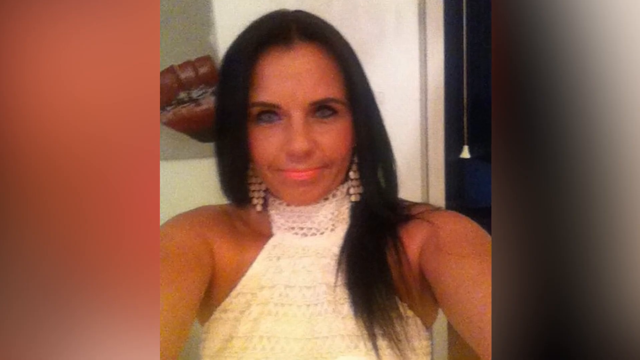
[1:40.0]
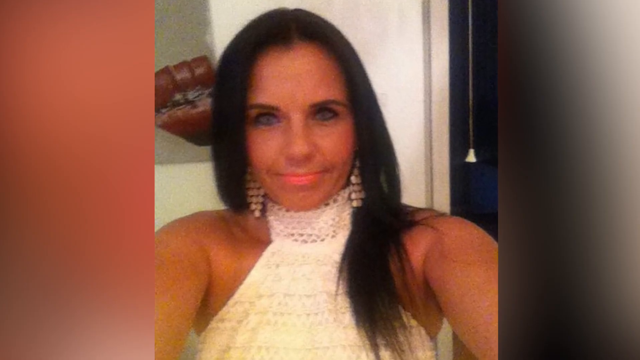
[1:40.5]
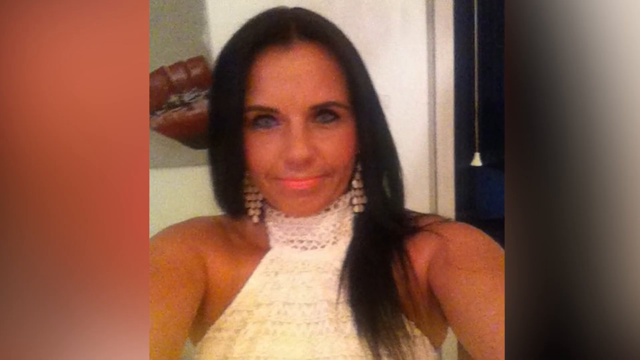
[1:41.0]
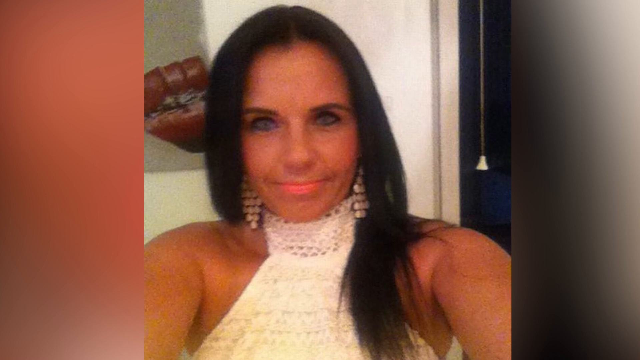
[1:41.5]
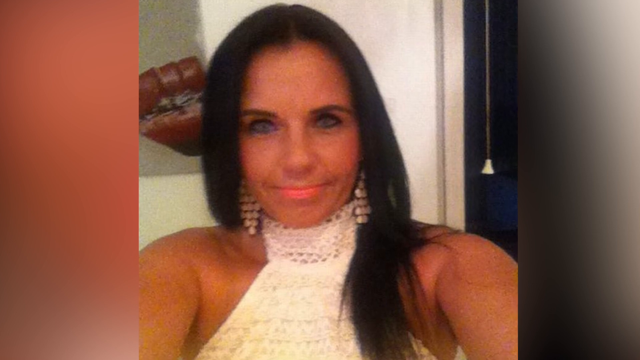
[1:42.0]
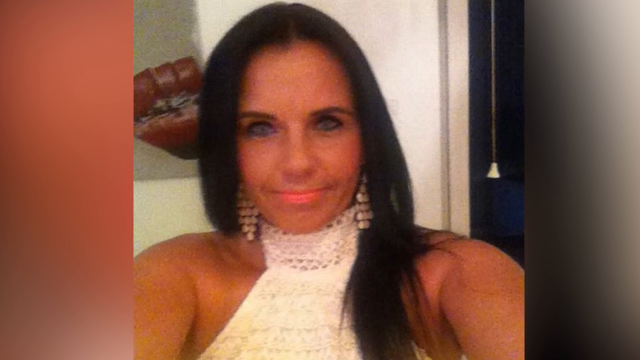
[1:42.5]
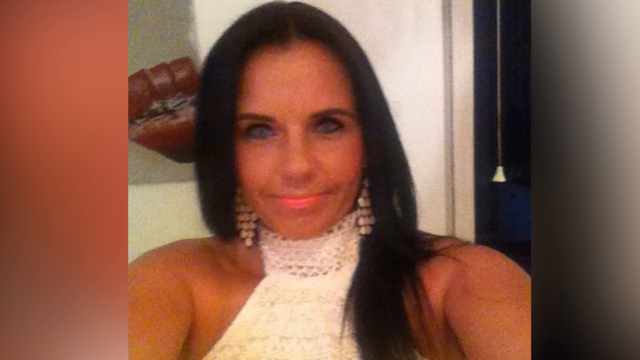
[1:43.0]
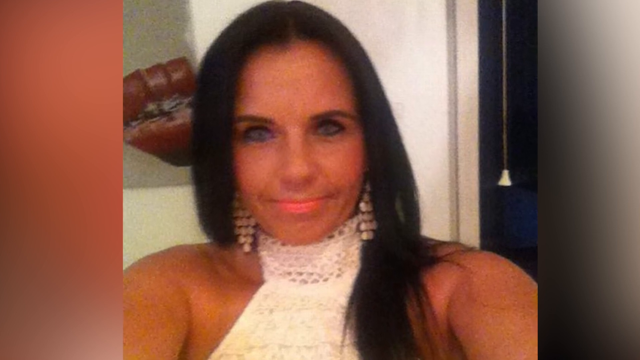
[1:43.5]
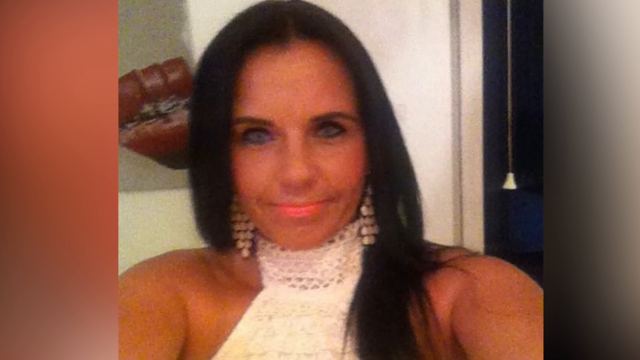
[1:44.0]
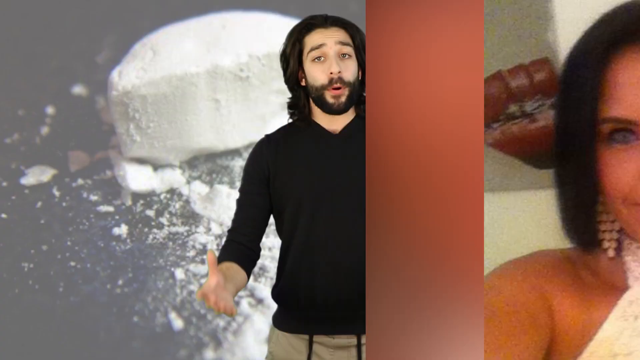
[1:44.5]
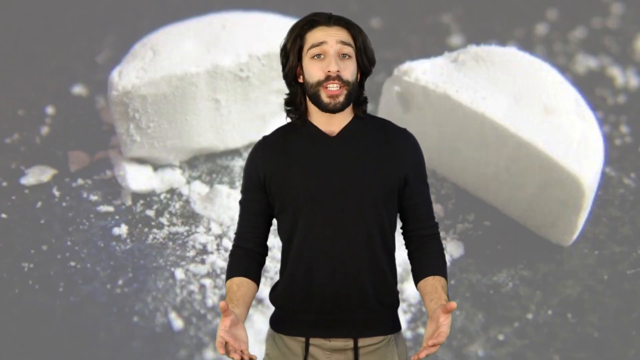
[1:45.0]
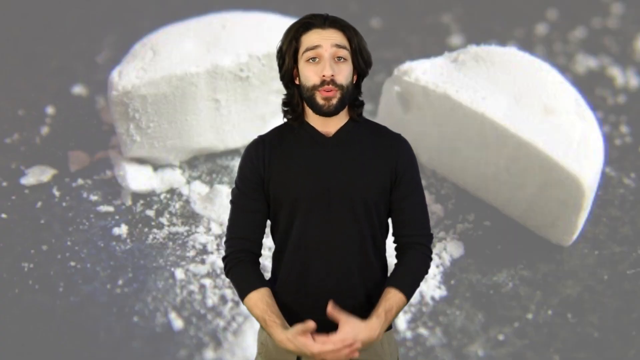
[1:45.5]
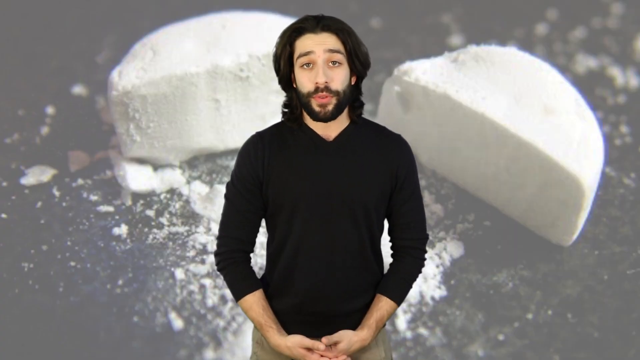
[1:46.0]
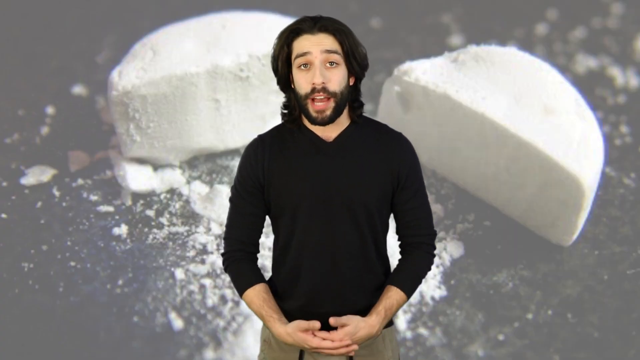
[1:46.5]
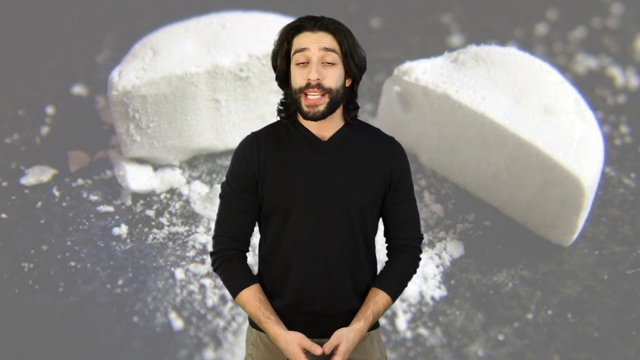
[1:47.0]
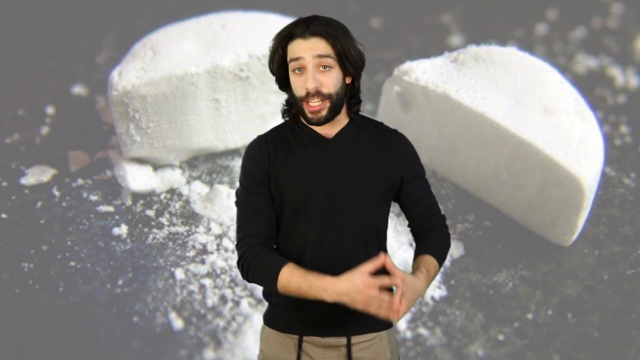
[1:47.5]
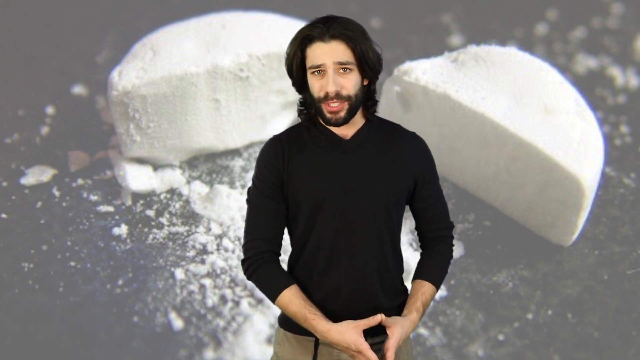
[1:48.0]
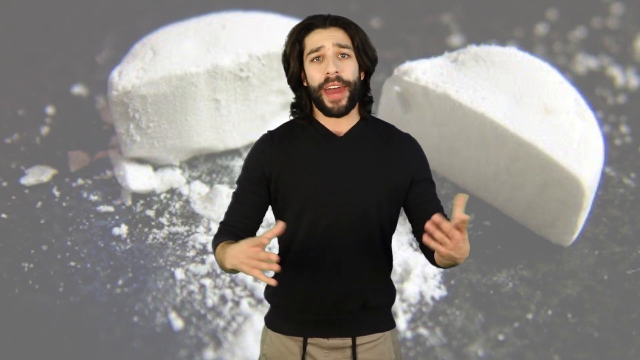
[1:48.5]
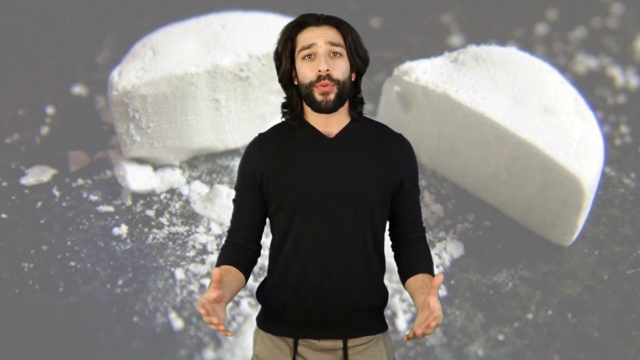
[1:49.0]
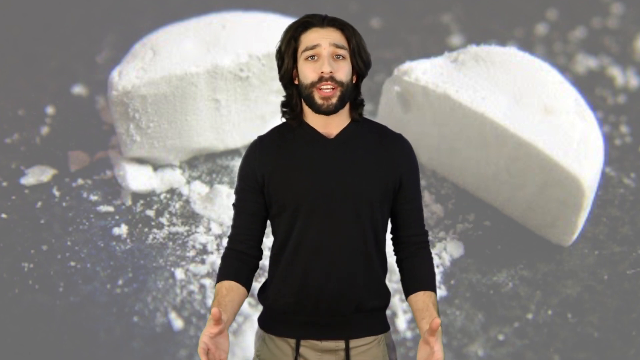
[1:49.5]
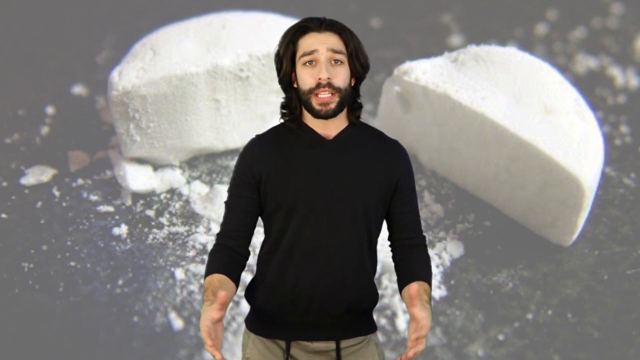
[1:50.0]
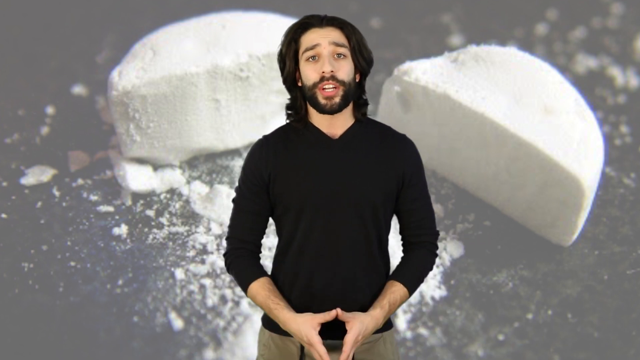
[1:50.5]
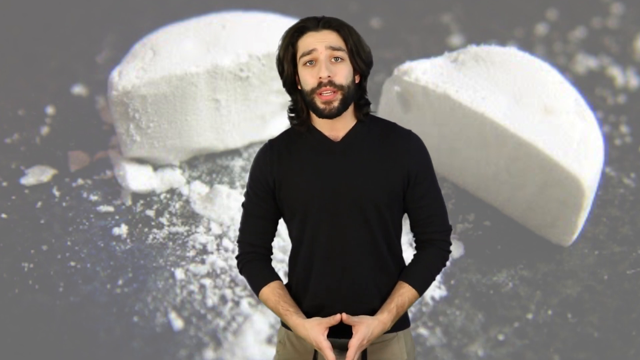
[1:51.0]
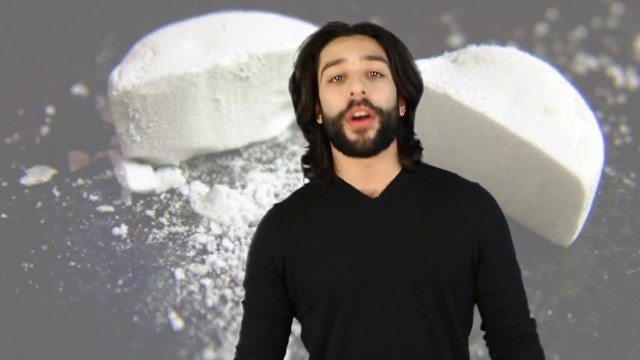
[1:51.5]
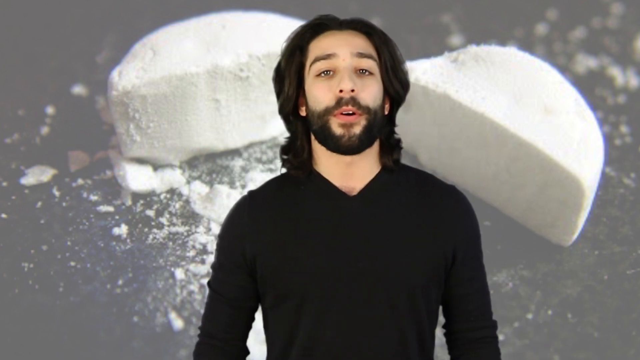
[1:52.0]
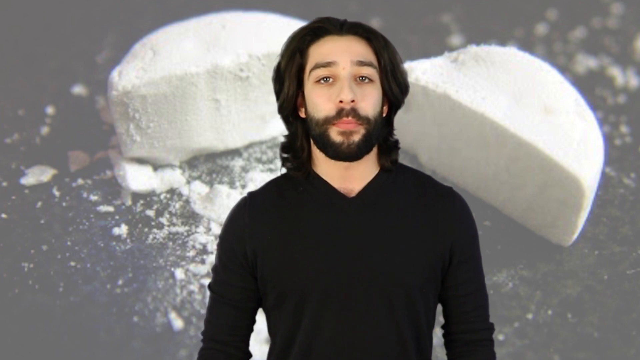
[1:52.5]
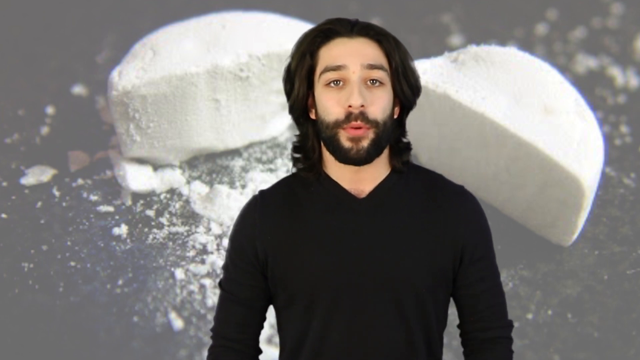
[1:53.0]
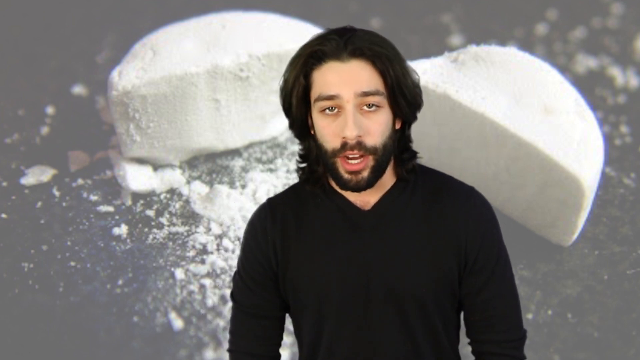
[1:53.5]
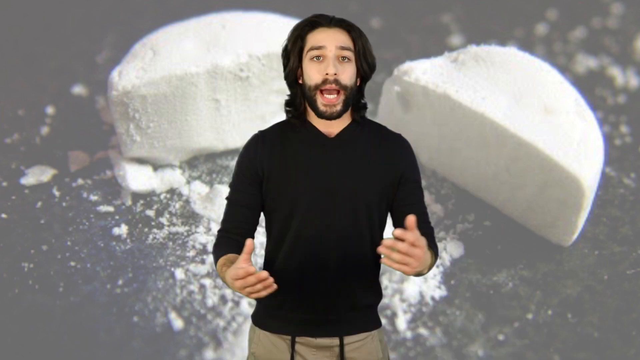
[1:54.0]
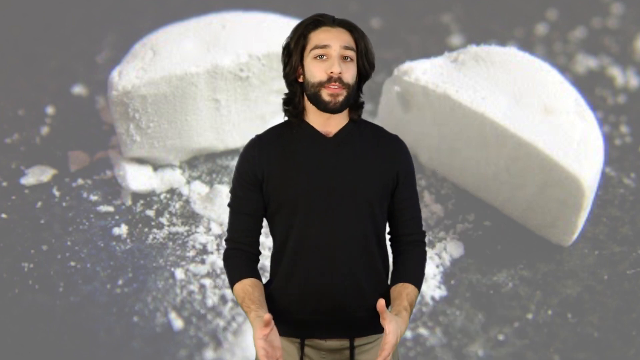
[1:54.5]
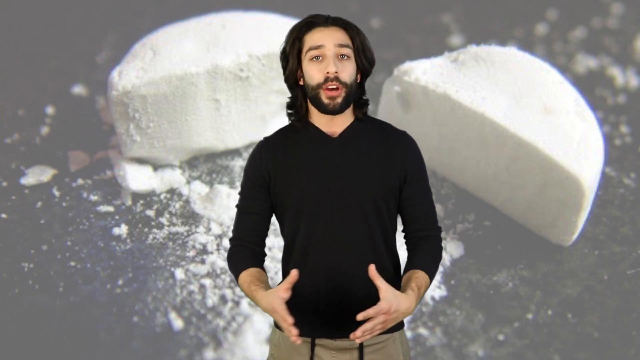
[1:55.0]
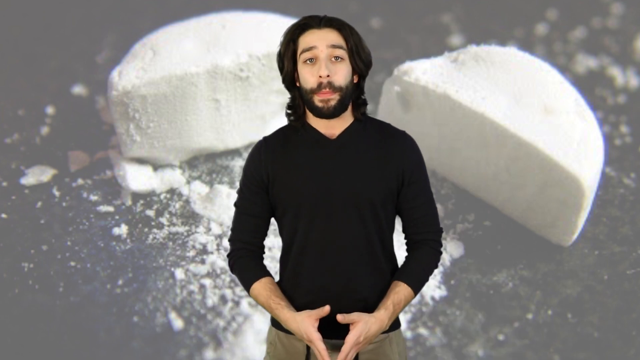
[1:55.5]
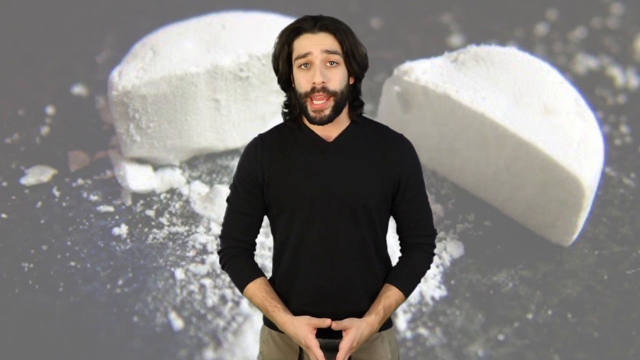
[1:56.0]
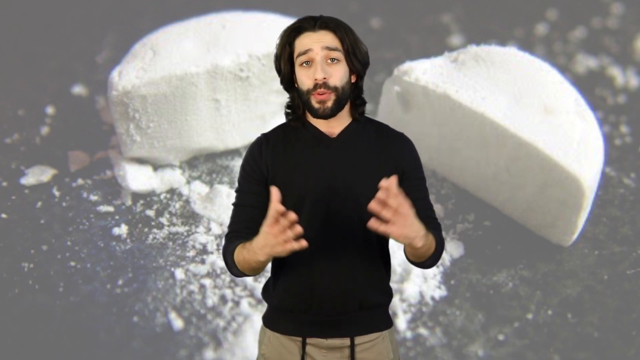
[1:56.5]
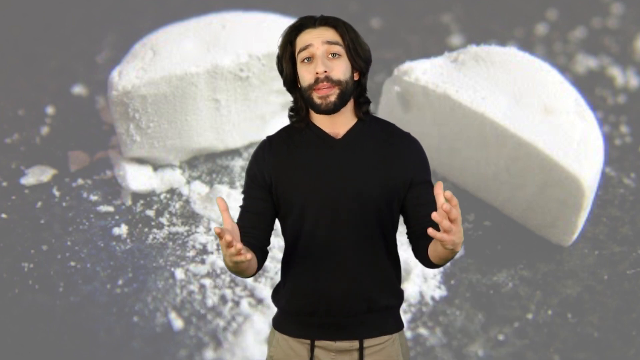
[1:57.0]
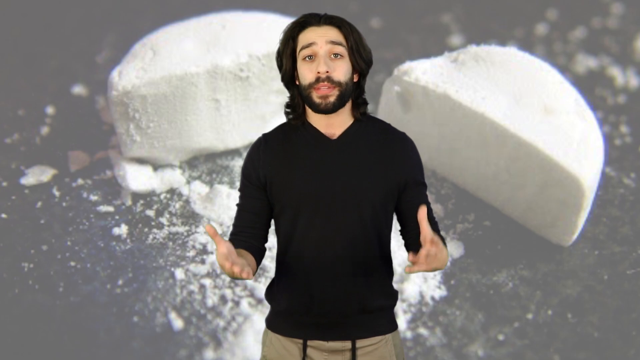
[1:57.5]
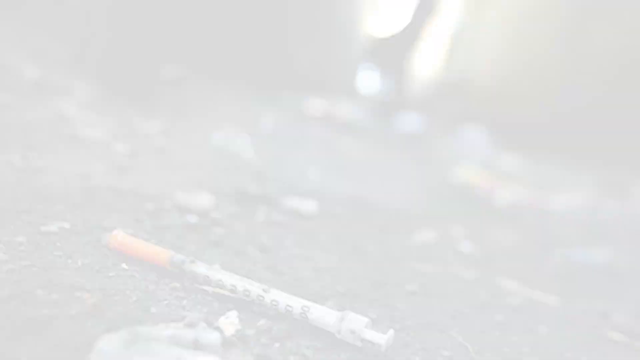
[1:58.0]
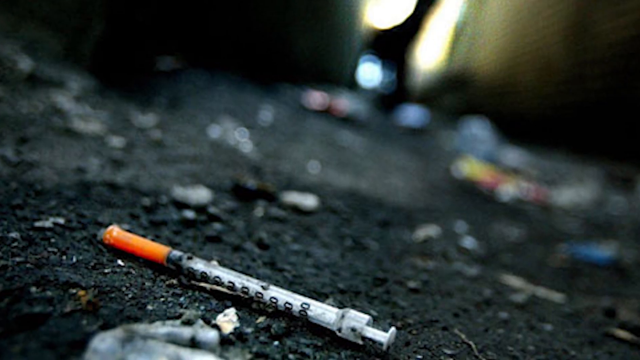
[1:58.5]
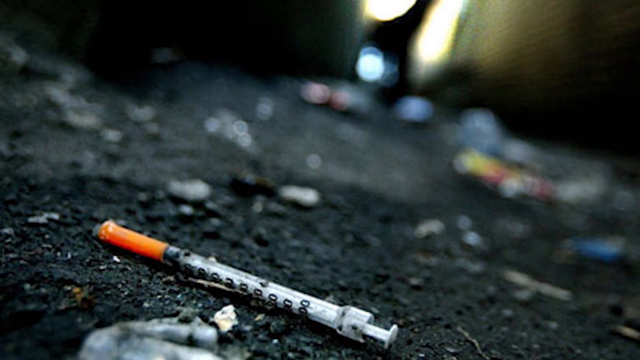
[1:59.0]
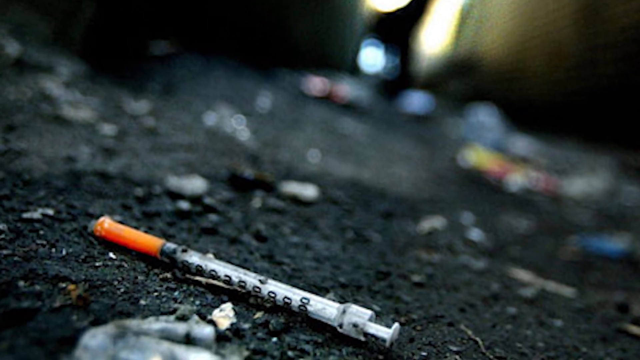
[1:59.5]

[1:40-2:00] The selfie of the woman is shown more closely. She looks healthy and happy and is smiling, with her hair done very nicely and wearing nice clothing, dressed up as she takes the photo of herself. At some point between shots of Jared speaking and this selfie, a syringe is shown on gravel, a sidewalk or the ground.